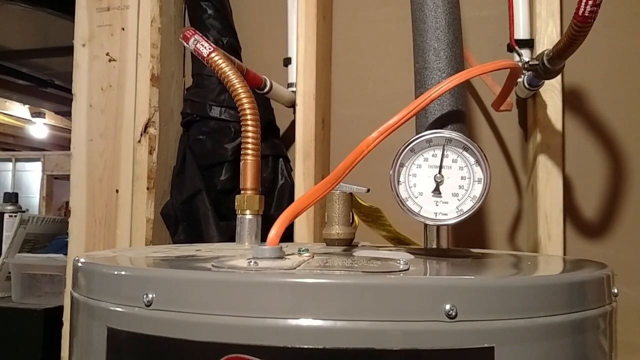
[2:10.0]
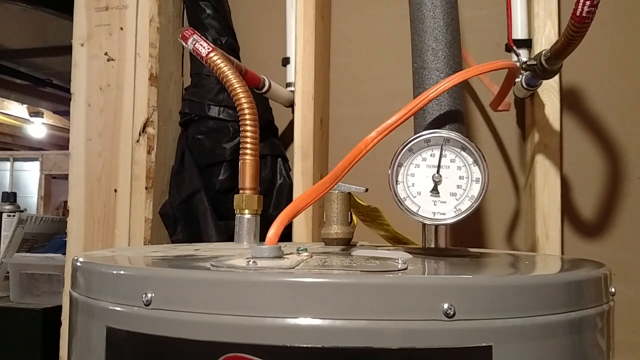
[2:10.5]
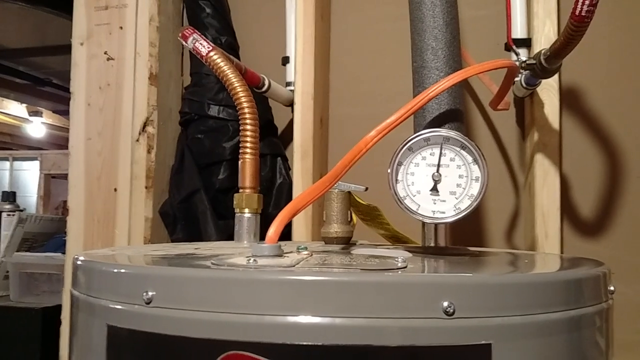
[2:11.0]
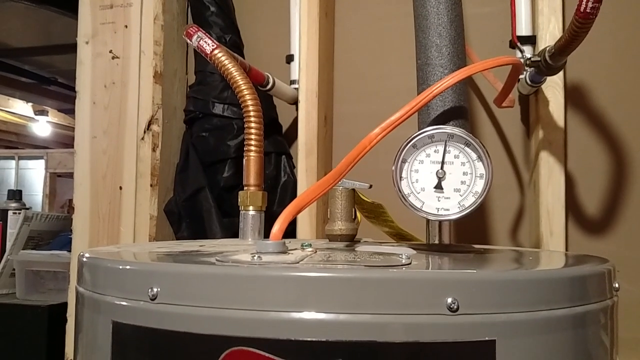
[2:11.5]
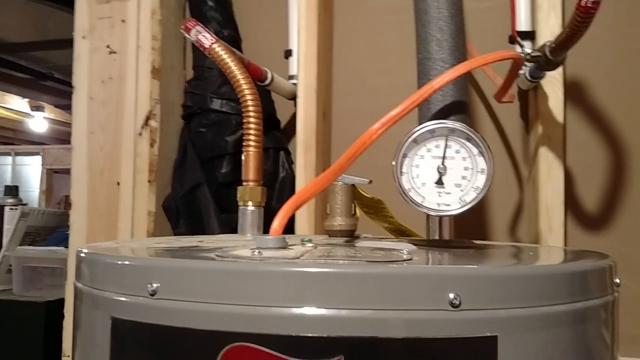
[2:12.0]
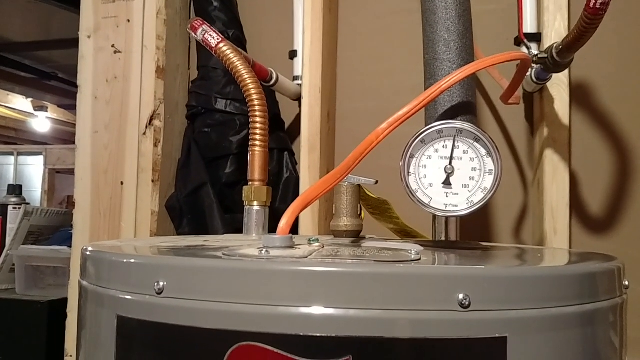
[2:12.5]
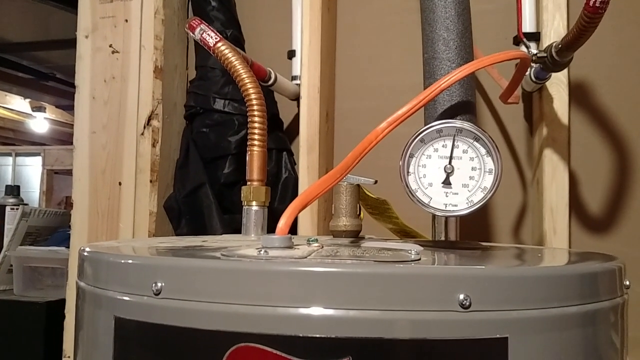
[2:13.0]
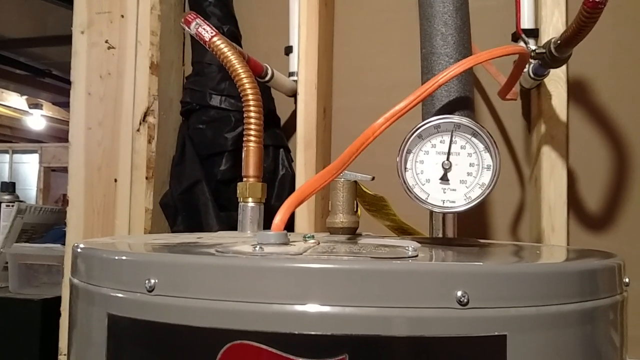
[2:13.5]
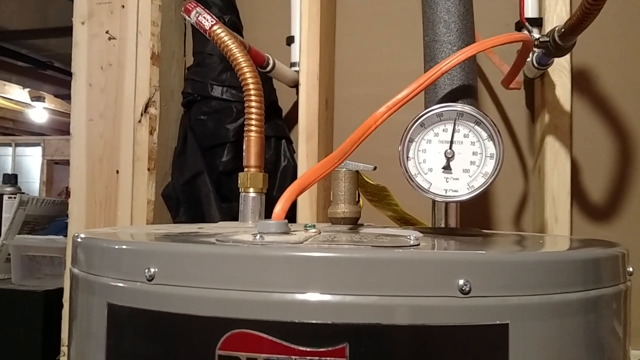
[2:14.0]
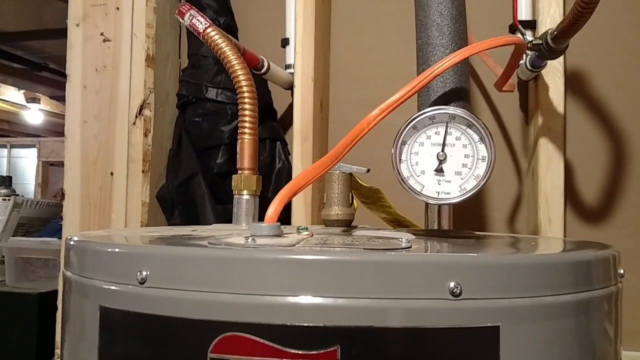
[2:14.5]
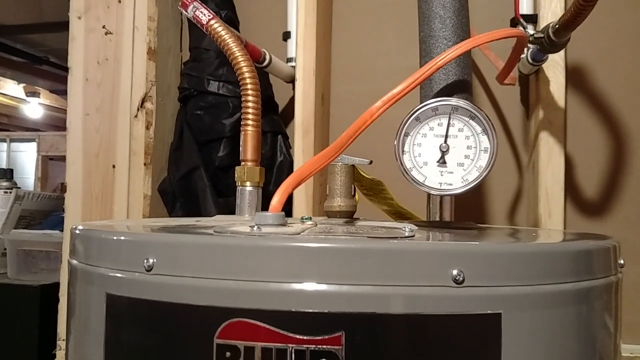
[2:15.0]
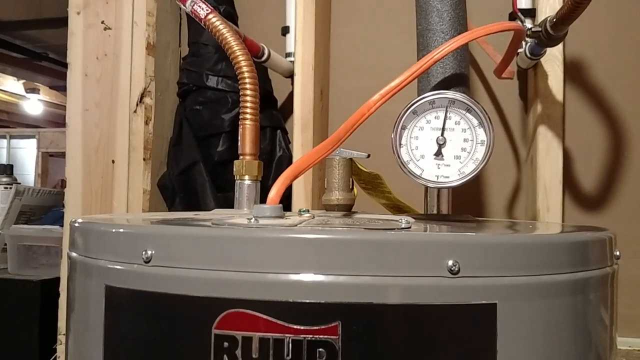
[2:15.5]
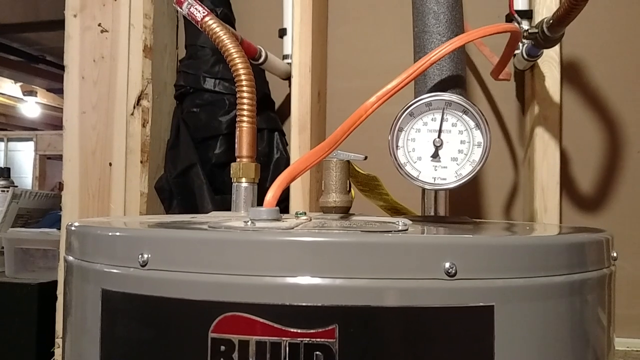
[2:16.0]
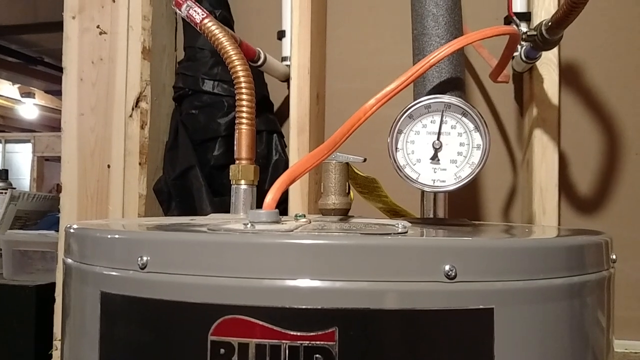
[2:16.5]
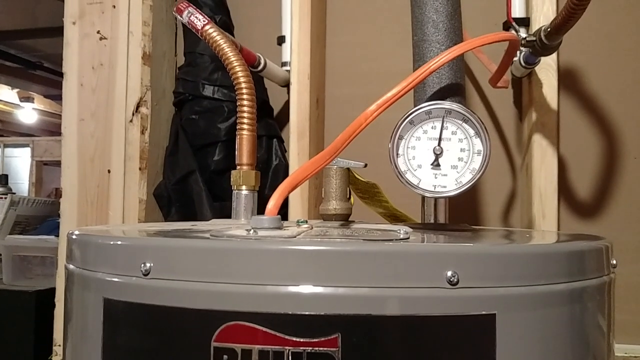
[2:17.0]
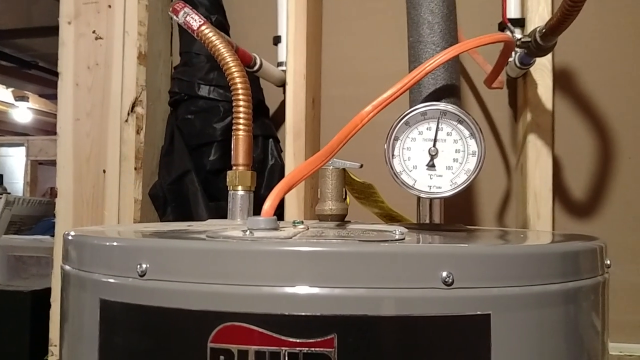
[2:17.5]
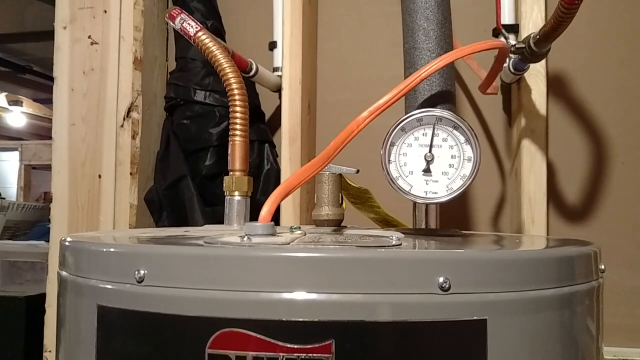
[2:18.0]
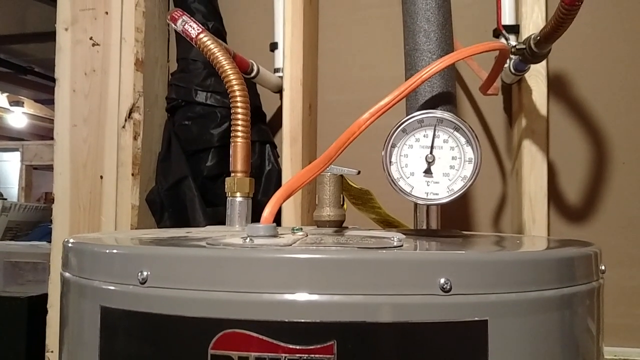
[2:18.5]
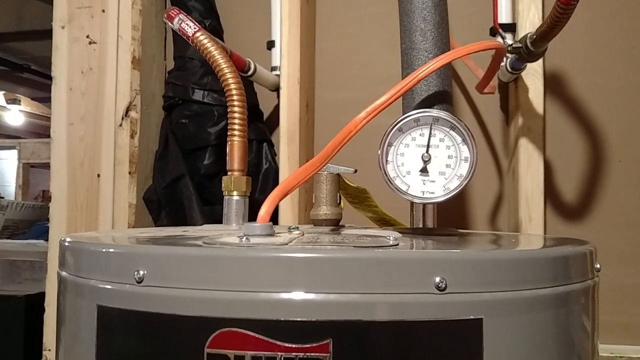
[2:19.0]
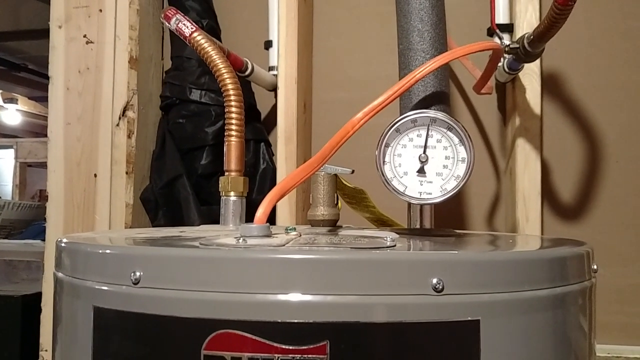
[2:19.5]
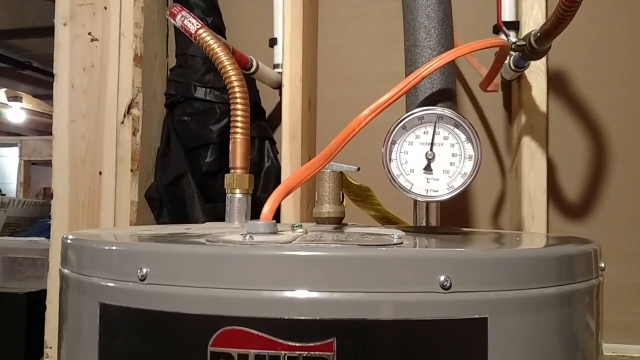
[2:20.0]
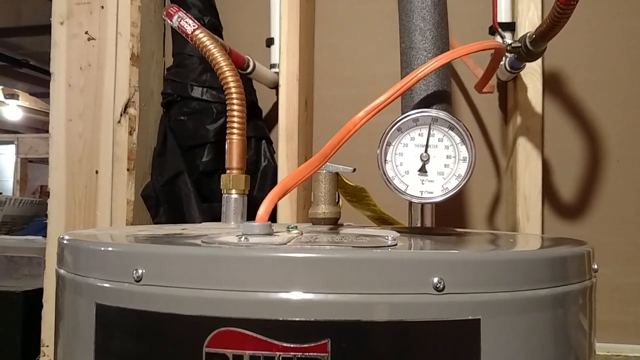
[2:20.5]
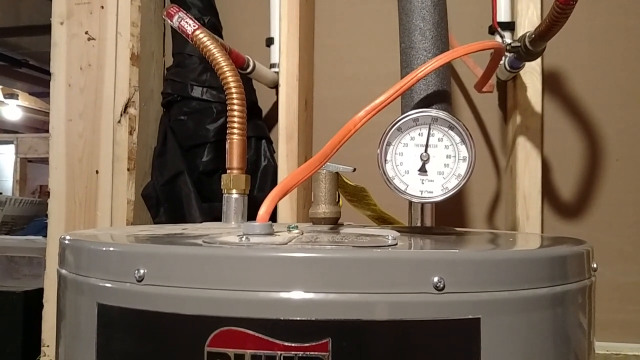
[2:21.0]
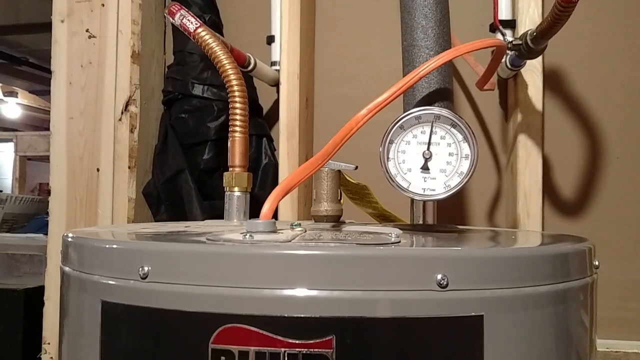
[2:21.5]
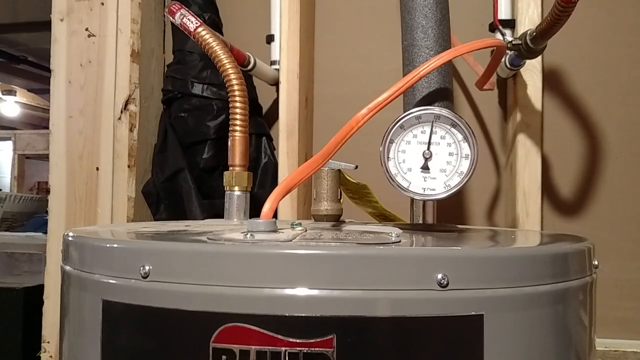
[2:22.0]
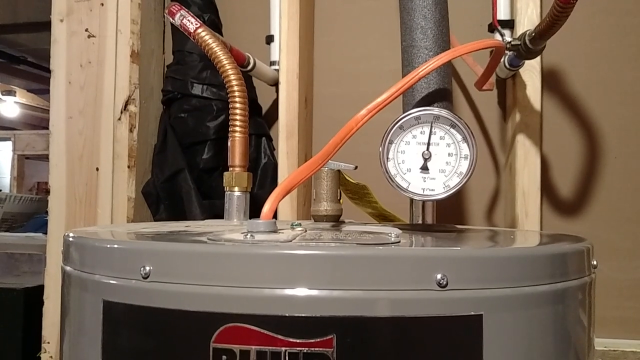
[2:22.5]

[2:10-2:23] An old-model black fireplace has a well-lit orange fire and is in a room that looks like a warehouse. The camera is very shaky. It shows the back of the fireplace where copper pipes are connected; the pipes go up to the roof, where the medium-sized tank that is the energy source is. The camera moves to show all the pipes connected to that tank, then moves to a well-lit space in the roof where a second container is. The second container has a brand name written on it, spelled "RUUD".